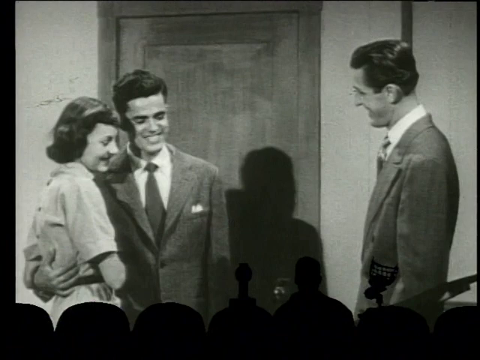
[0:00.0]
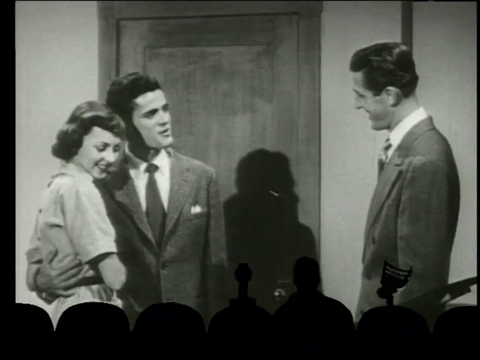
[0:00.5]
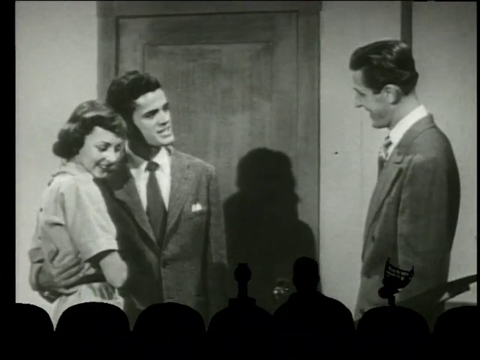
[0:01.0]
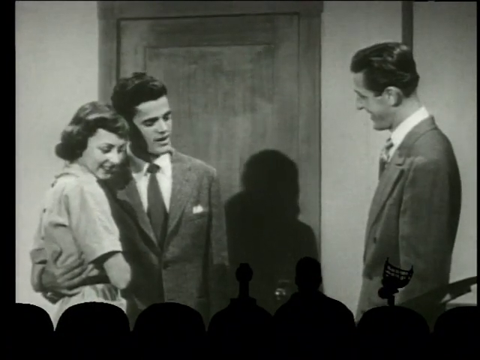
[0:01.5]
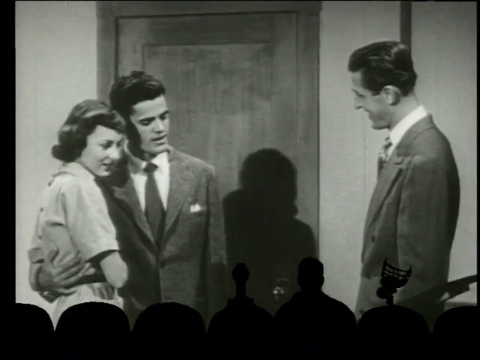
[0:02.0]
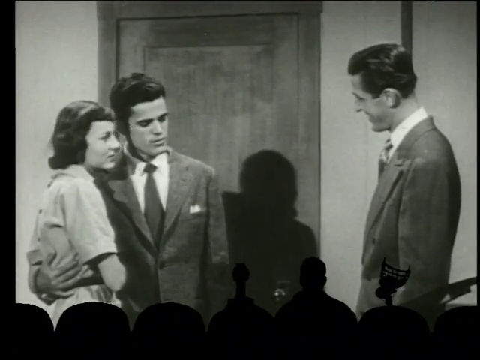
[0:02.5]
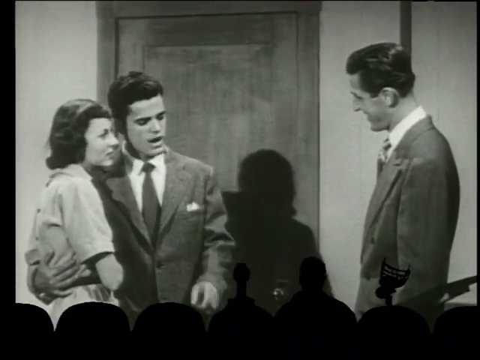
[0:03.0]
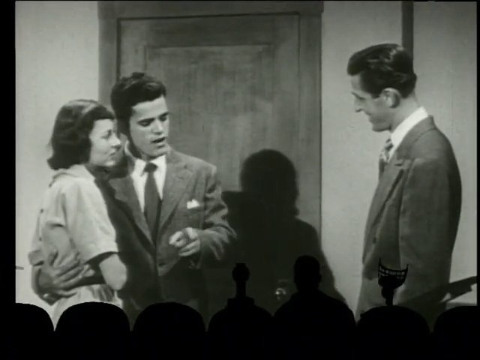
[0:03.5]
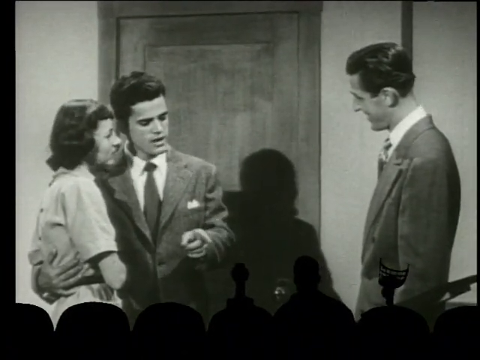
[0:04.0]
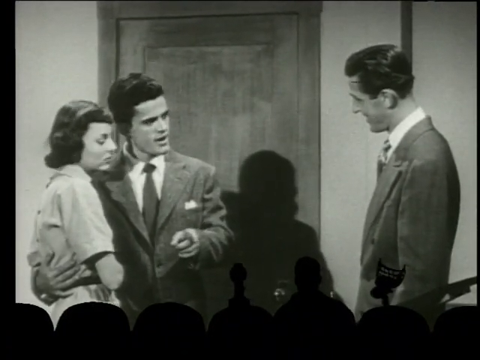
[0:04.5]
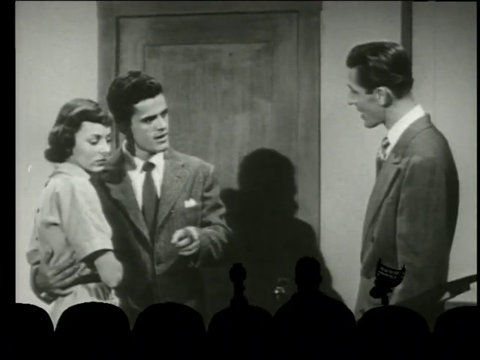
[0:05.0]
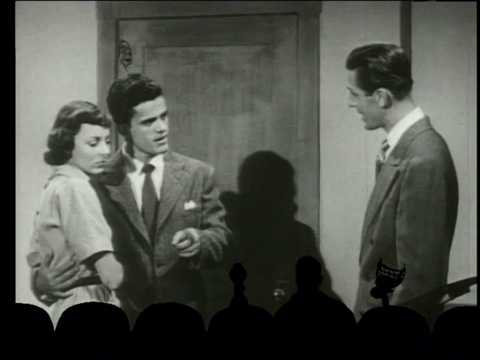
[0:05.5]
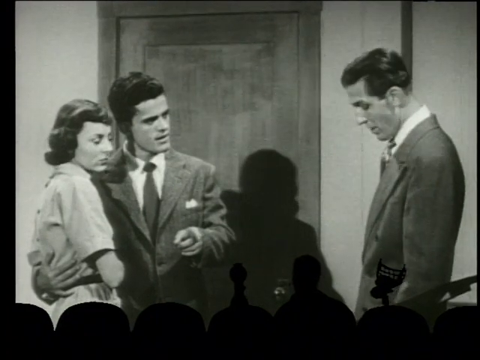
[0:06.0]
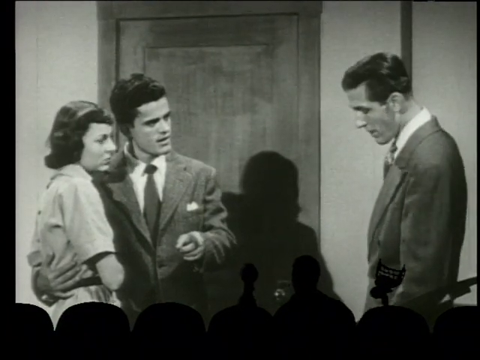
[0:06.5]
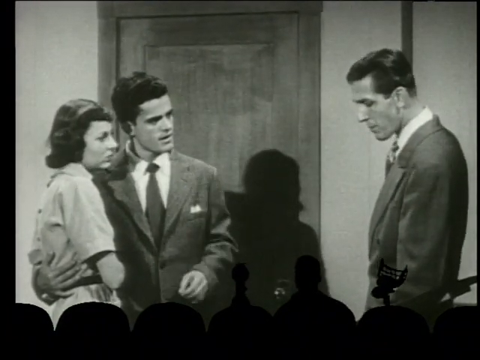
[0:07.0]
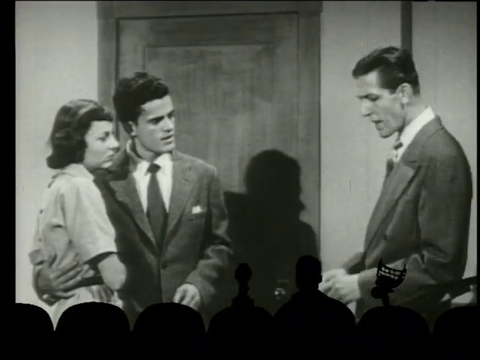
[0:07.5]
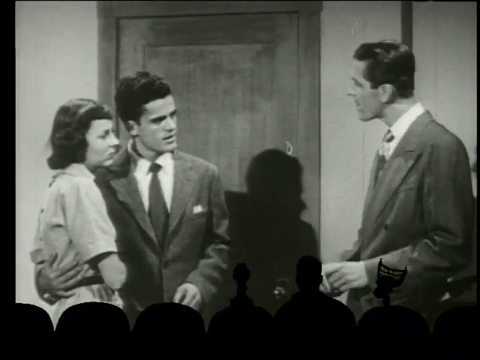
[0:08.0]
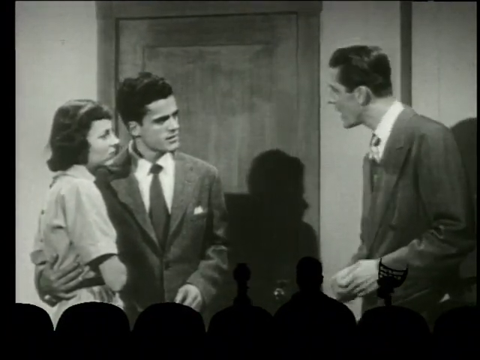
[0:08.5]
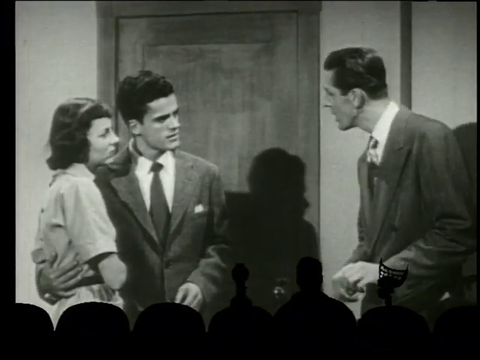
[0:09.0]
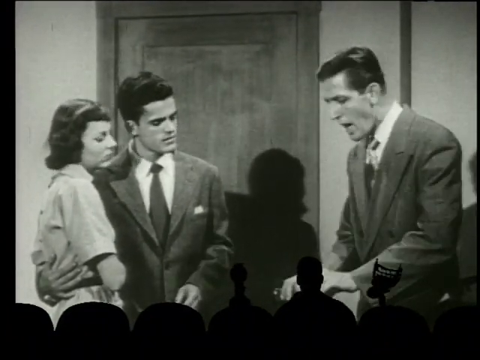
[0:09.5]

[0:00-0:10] The main subject is a film being shown in a theater, projected at the front. People's heads are visible, and others are standing. The movie, made in the 1950s, shows a gentleman wearing a suit holding a lady, and another gentleman wearing a suit. They are having a conversation, and a door made of wood is visible. The gentleman holding the lady points, and they keep conversing with the gentleman who is not holding the lady. Then the gentleman opens something like a bottle and pours a substance.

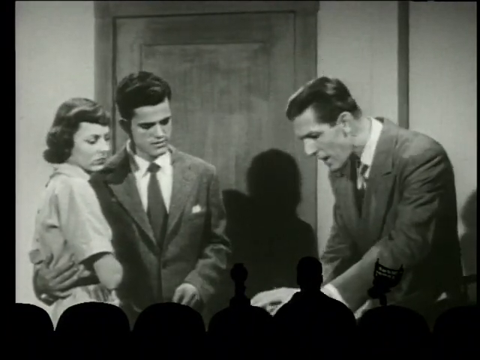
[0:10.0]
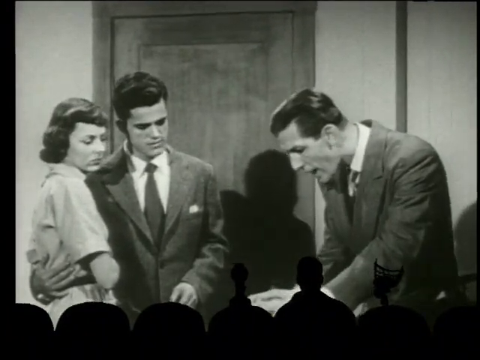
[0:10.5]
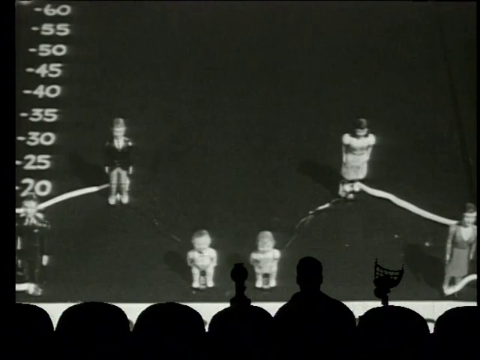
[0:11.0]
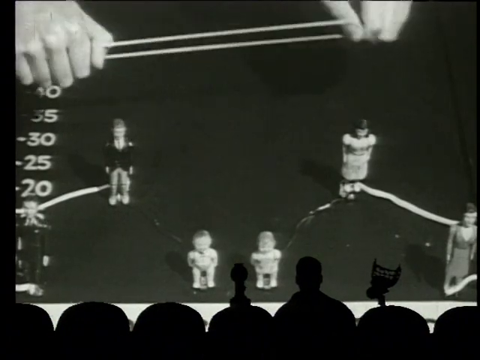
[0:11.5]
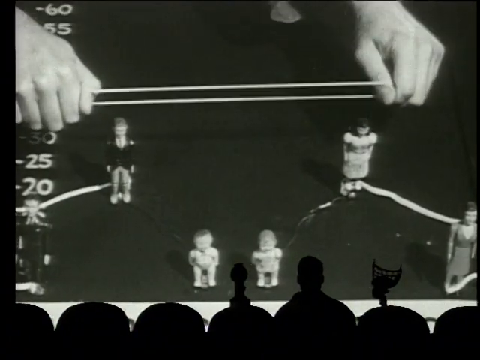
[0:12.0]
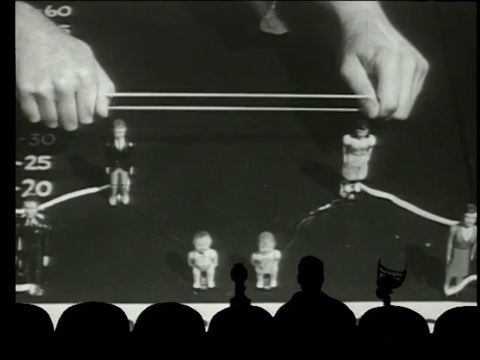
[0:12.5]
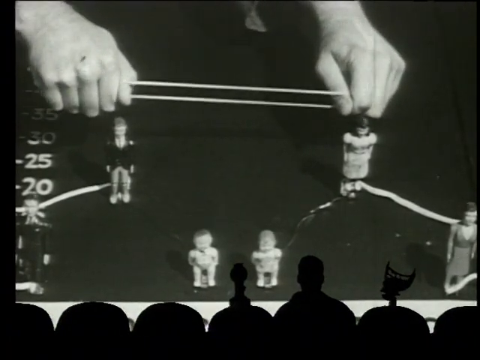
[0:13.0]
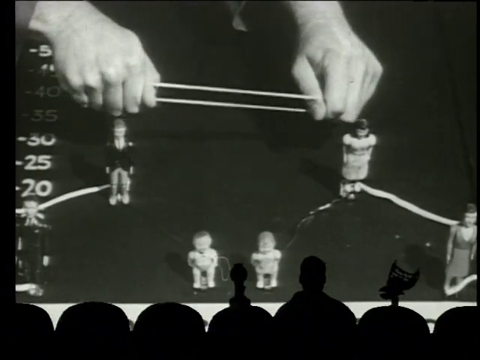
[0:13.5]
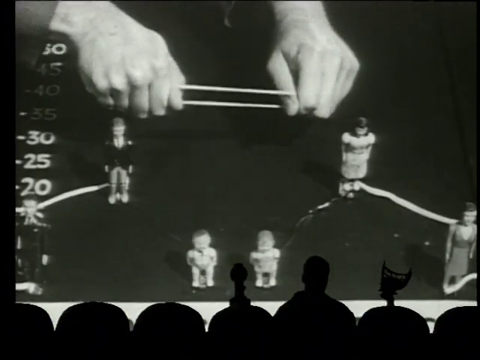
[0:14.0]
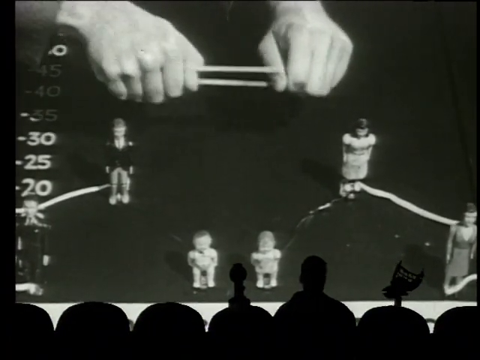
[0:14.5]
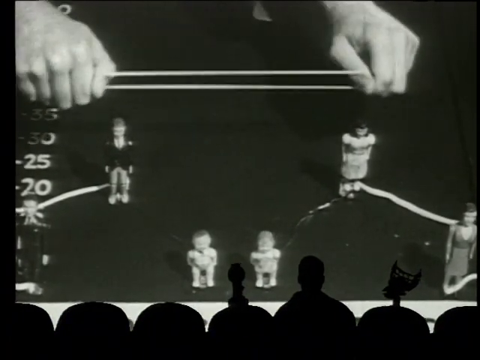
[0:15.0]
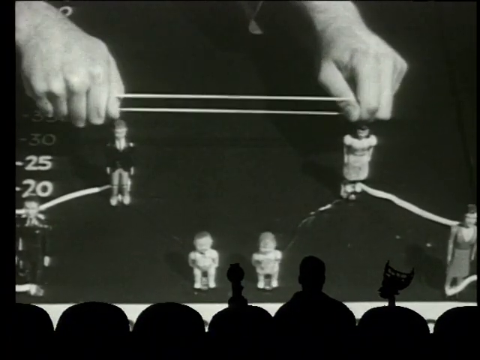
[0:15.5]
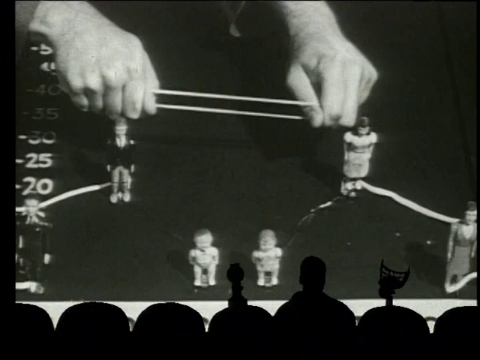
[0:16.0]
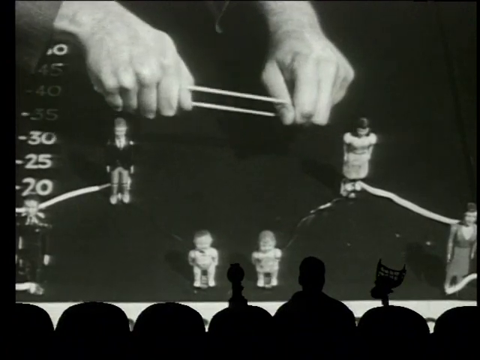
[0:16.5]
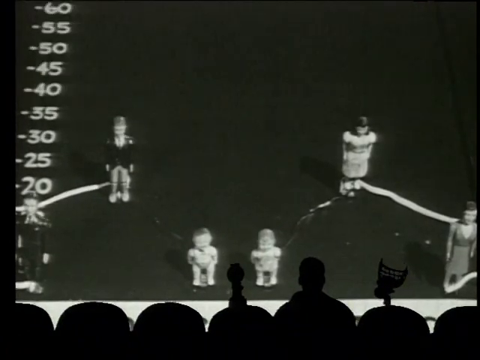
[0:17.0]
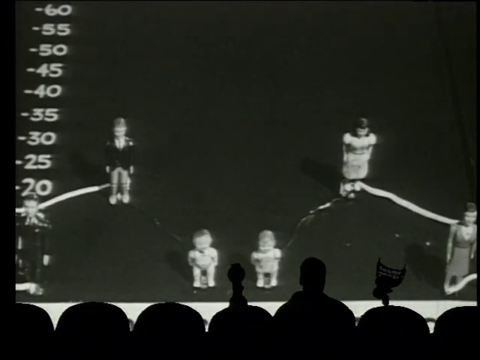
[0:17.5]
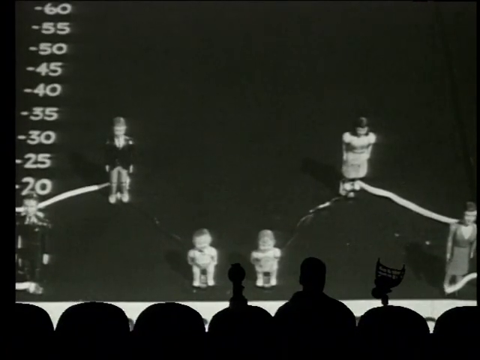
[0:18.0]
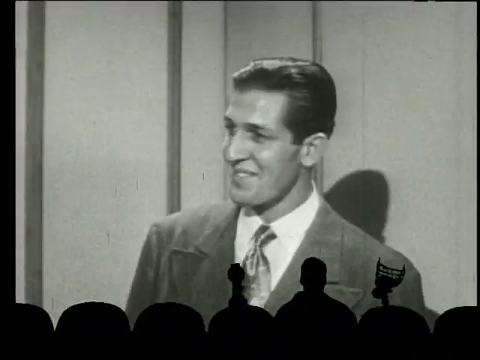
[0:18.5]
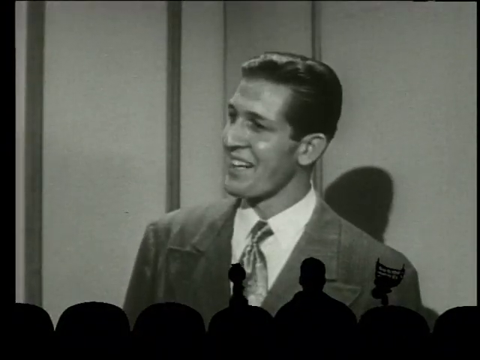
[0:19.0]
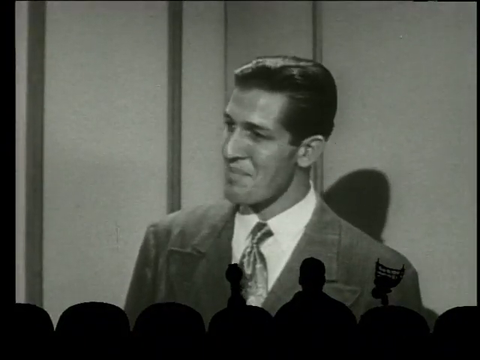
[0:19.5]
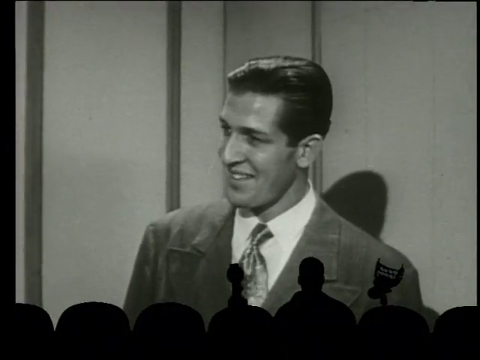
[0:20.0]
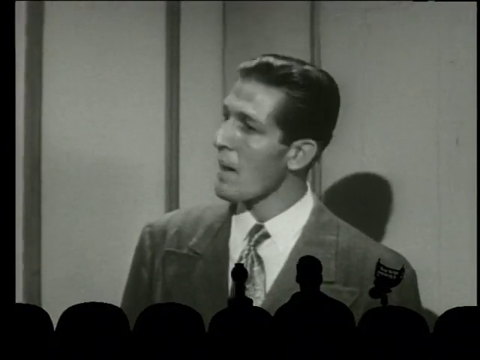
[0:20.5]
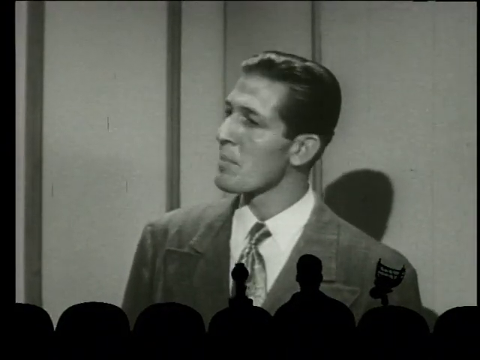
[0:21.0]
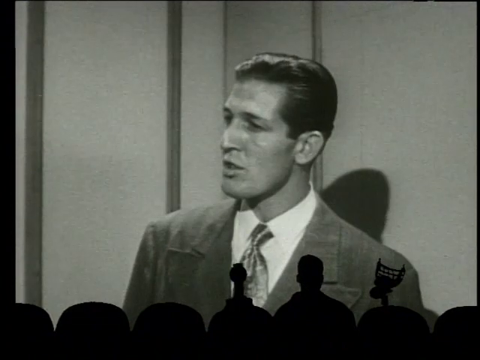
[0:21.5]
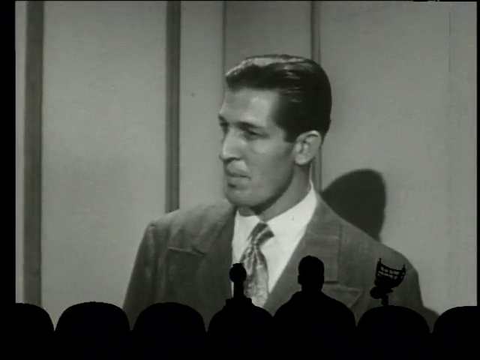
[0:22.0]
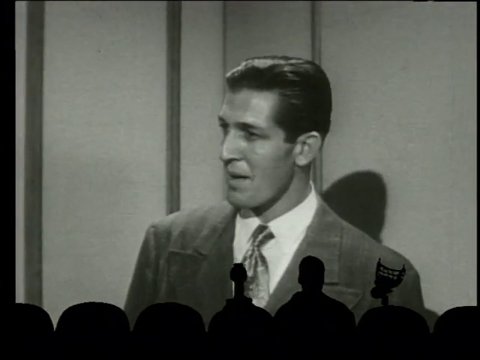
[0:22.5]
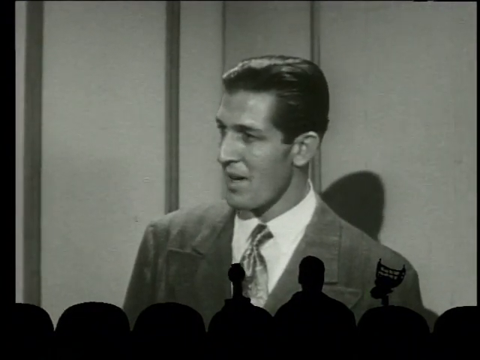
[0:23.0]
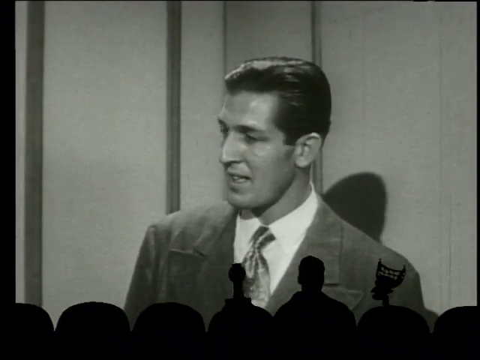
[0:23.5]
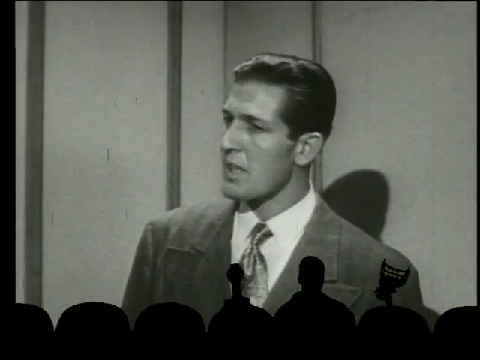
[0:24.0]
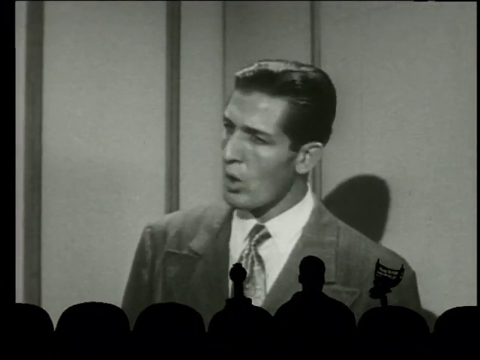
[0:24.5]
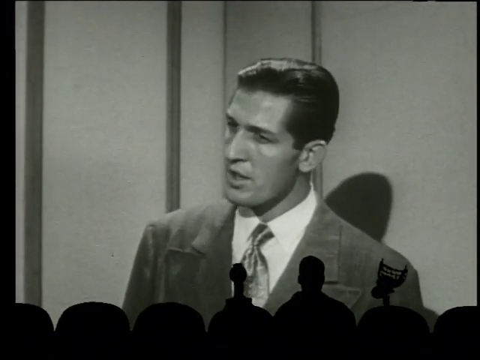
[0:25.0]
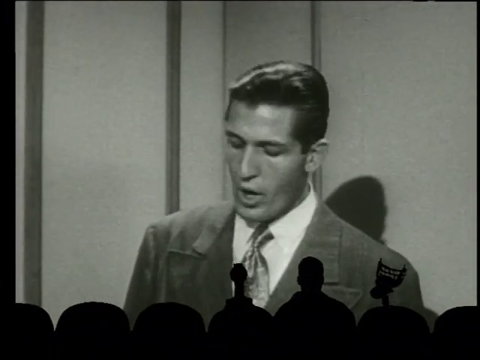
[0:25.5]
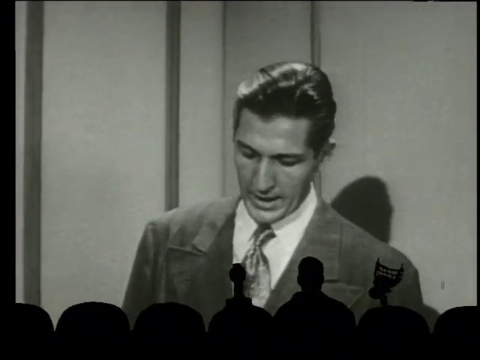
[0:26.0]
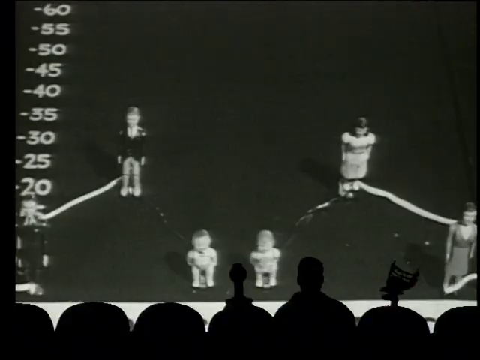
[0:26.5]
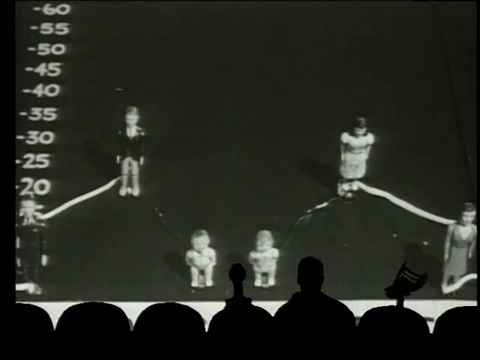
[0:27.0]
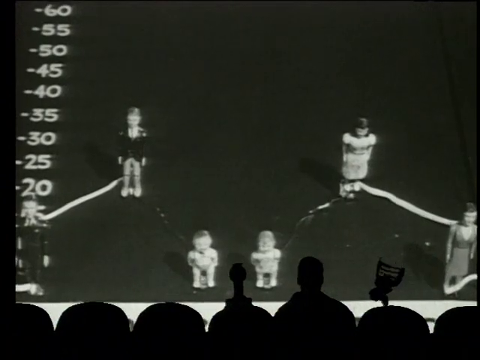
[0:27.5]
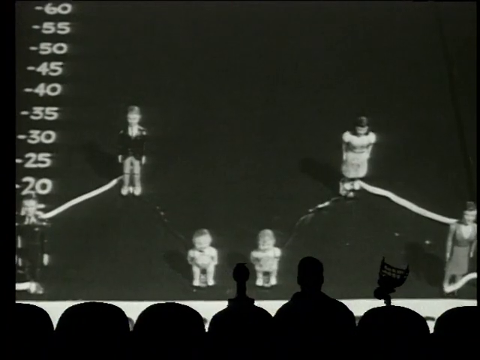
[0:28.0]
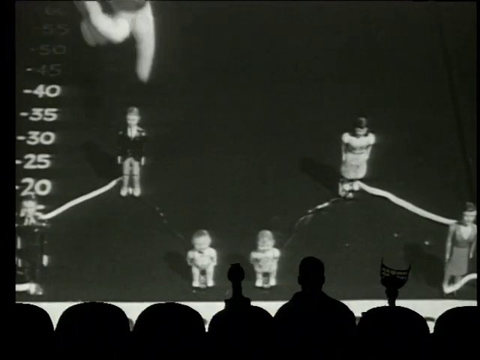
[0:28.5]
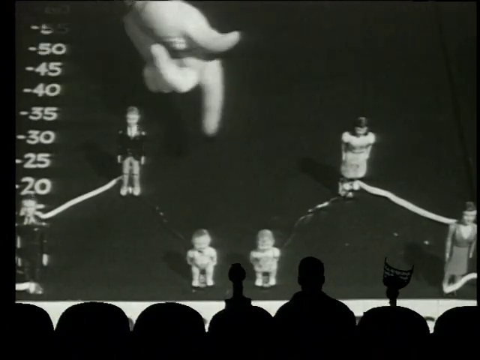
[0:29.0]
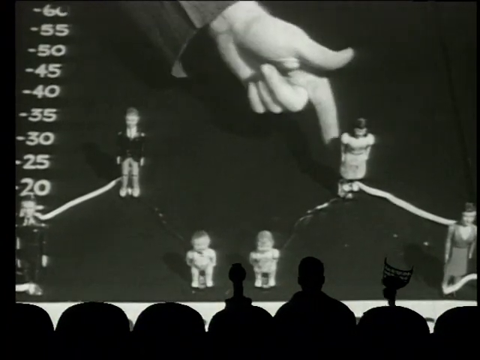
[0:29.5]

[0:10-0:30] In the theater, a film from the 1950s is projected on the screen. The audience is still visible from behind, some seated and others standing. On the screen, a gentleman in a suit is holding a lady, with another gentleman standing still nearby. As they talk, the gentleman who is not holding the lady opens a bottle and shows something on the table. Numbers are visible on the left side: 20, 25, 30, 35, running from 20 up to 60. There are figures that look like small dolls: two babies, two young adults (a man and a female), and a man and a lady. On the left side there is another doll, a small sculpture of a man. The man holds a bladder, which is elastic. The man who is not holding the lady keeps speaking to the other two while they look at the table with the dolls, and then he points at the dolls.